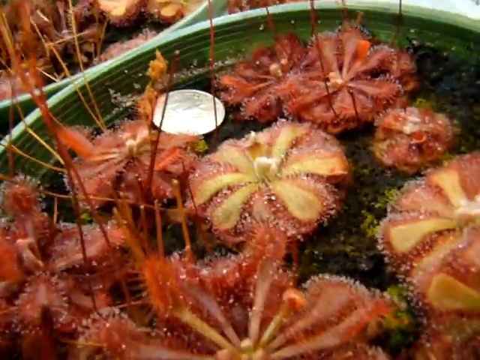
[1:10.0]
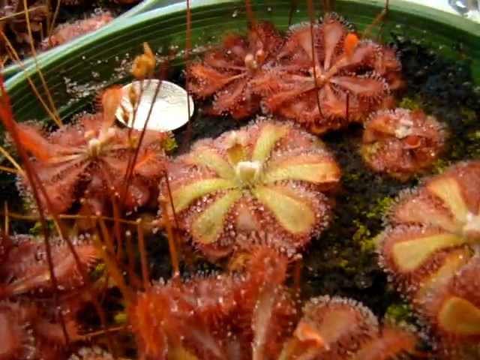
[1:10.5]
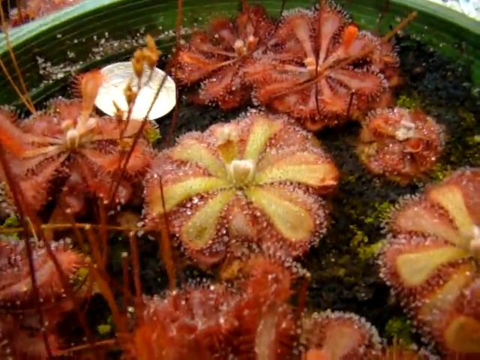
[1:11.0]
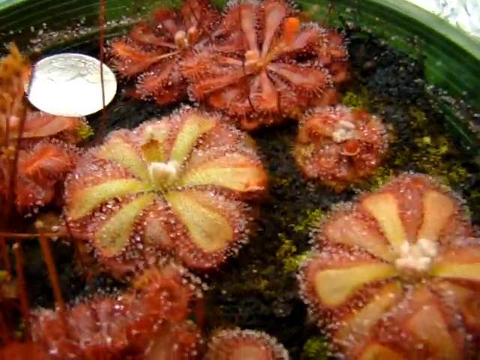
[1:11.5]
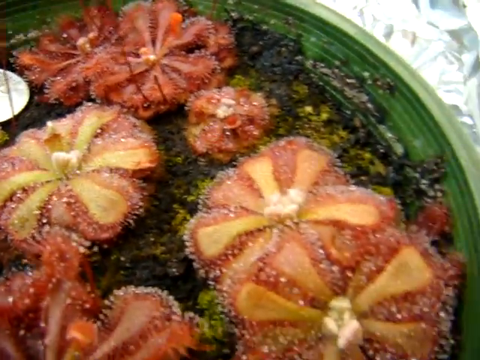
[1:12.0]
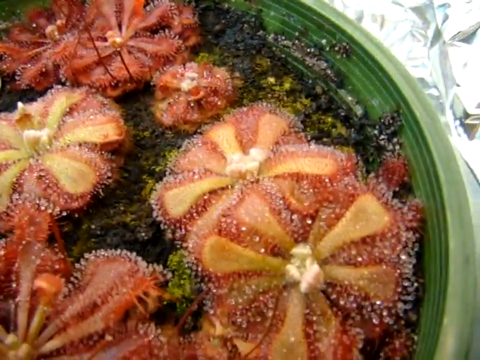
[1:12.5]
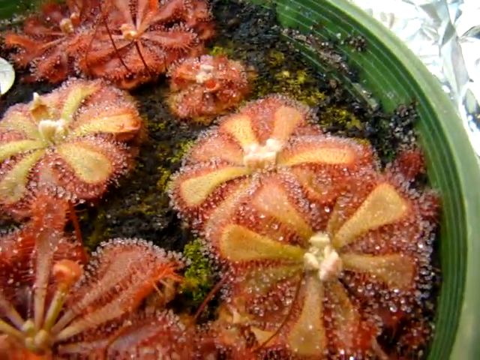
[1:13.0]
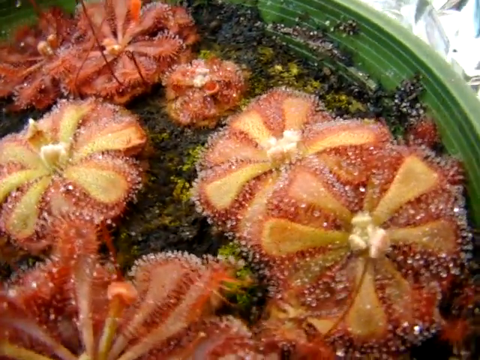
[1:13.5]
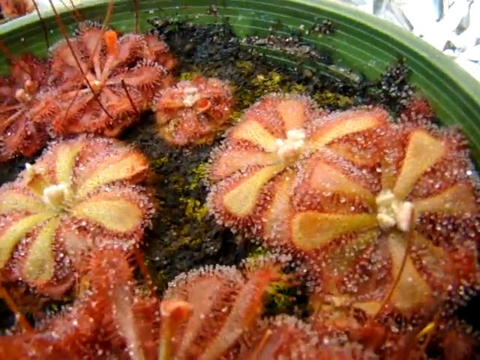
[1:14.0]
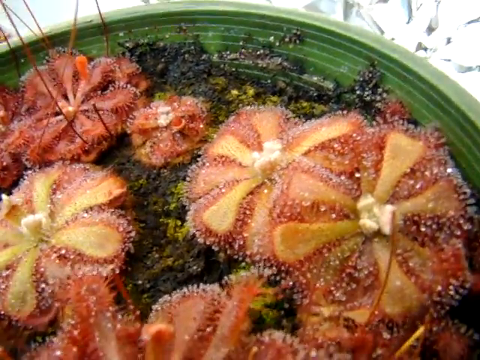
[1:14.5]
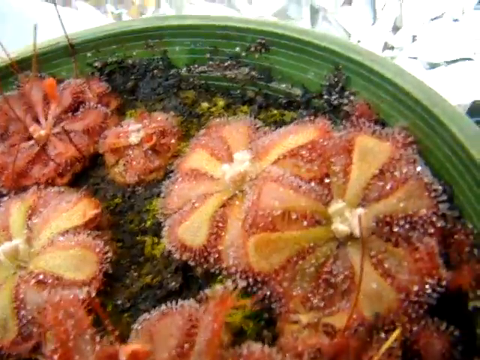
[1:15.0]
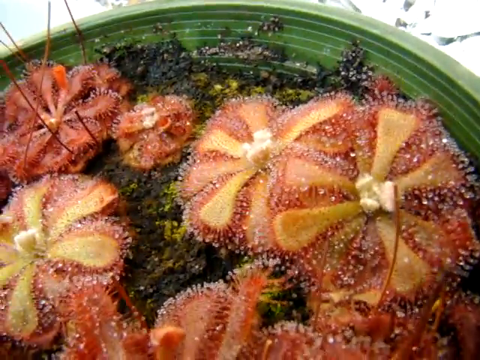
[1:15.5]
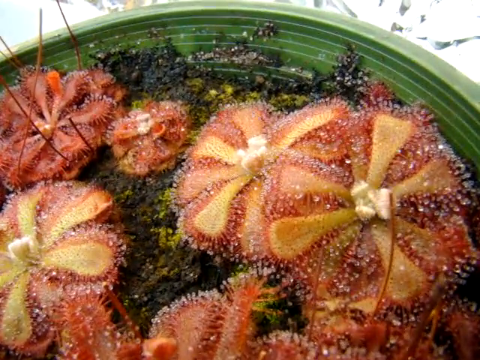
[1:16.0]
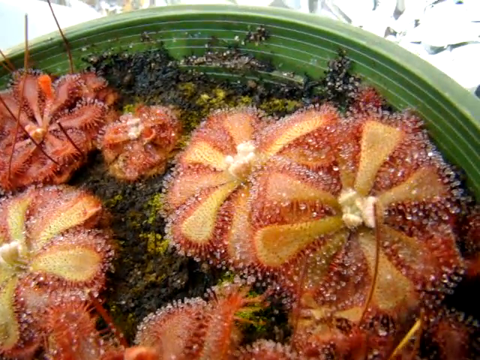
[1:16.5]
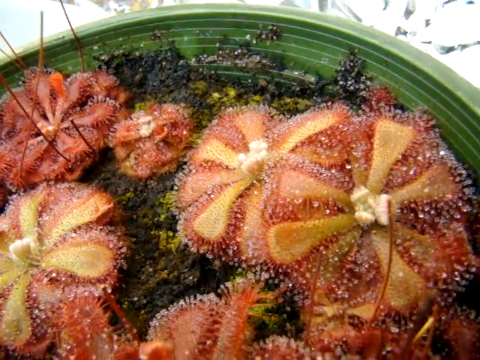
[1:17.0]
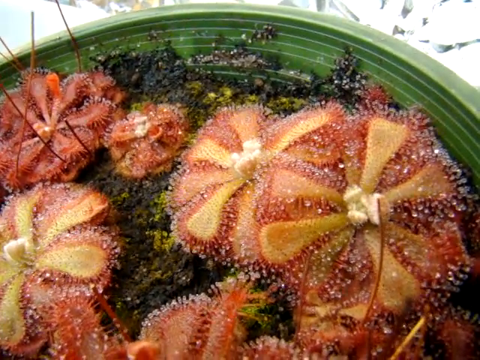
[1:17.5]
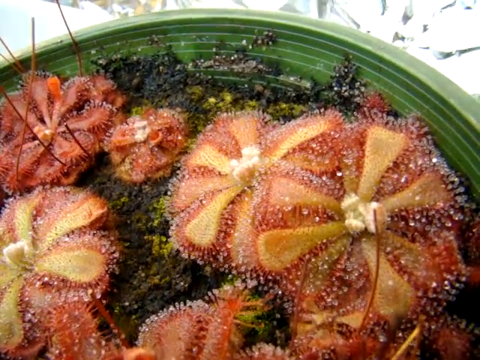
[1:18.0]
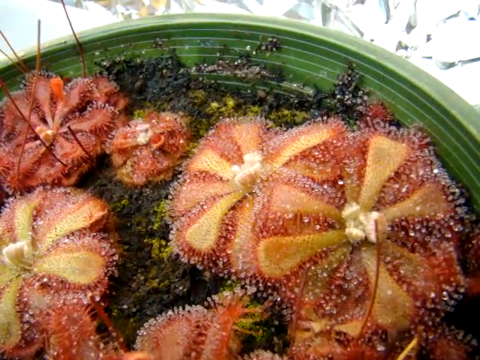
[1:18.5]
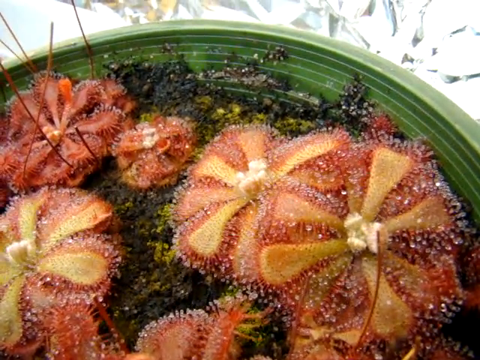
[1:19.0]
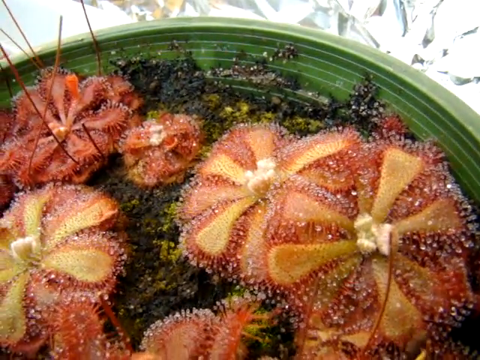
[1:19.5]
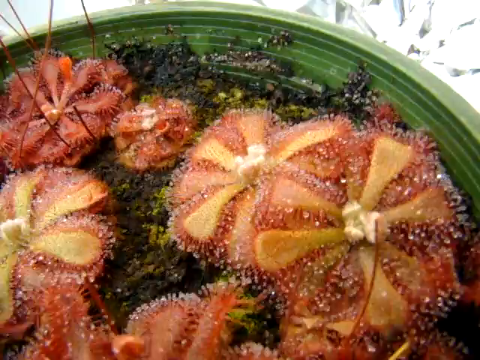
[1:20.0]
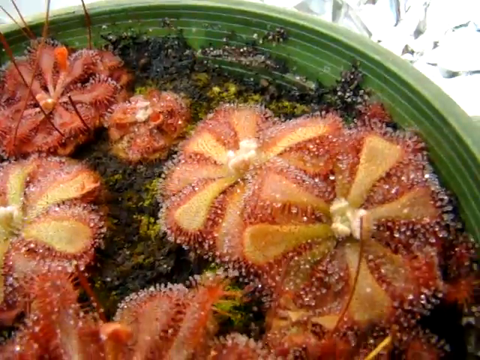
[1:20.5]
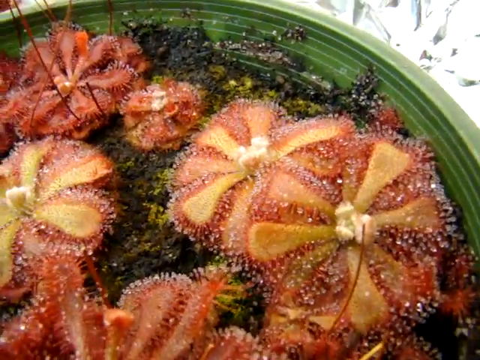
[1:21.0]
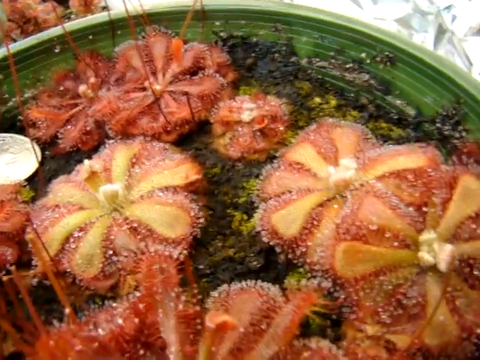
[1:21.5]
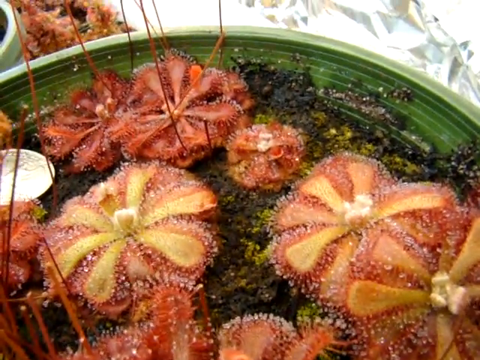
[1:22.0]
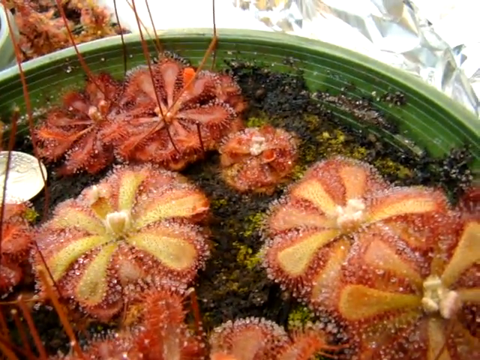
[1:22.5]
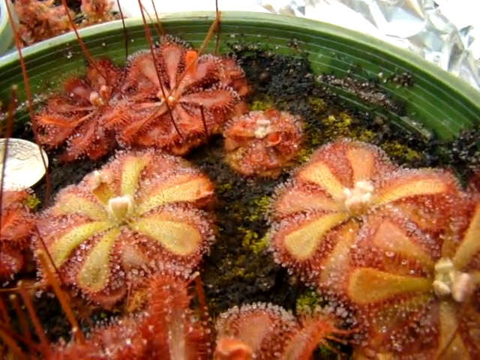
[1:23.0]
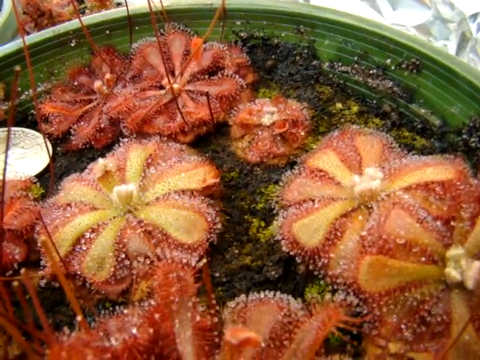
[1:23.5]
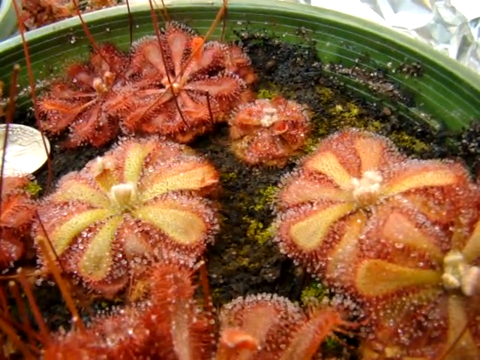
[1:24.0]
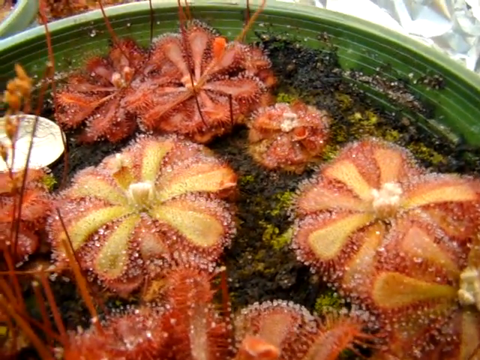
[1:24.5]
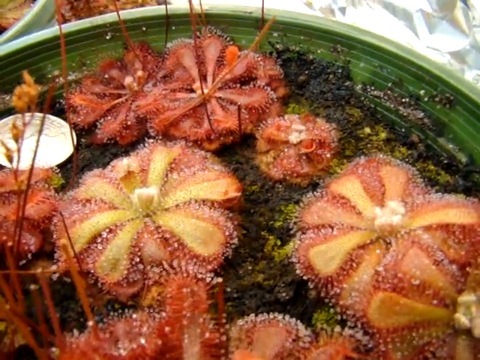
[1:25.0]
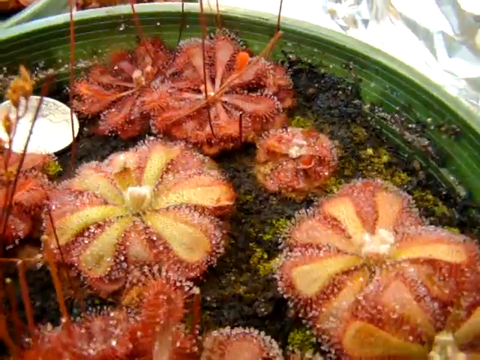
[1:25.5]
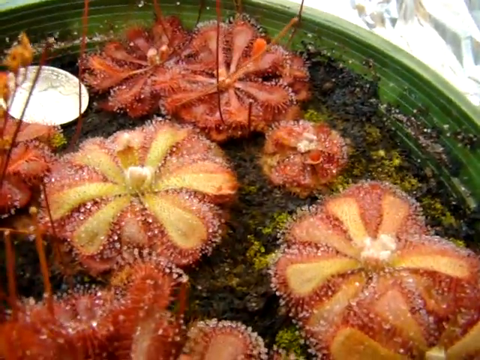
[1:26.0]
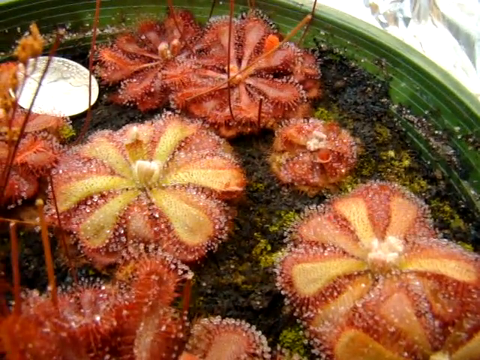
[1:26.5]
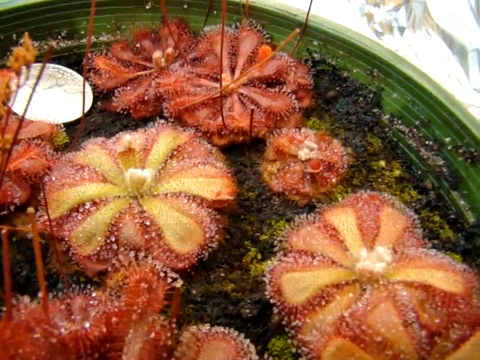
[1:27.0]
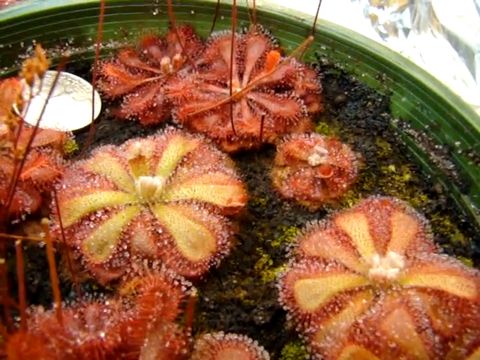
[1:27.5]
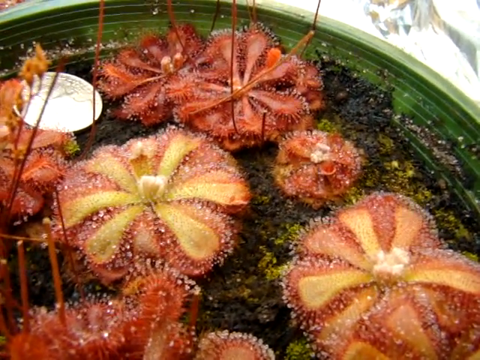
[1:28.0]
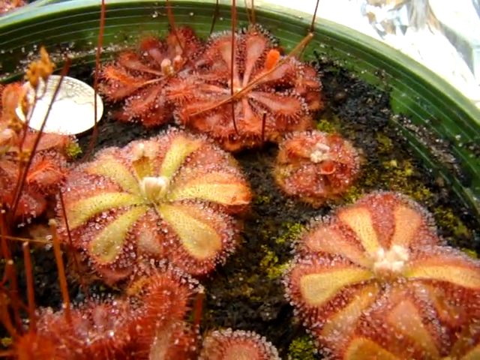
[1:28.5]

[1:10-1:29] The view zooms in on each plant; there are about seven or eight plants within this plant, some bigger, some smallest and some mid-sized, and some look like they are drying out. Small stems are shown growing on top of the plant. The sides look like they have been molded, and there is what looks like feathers that are red or white in colour. The view then zooms in around the top of the green pot.